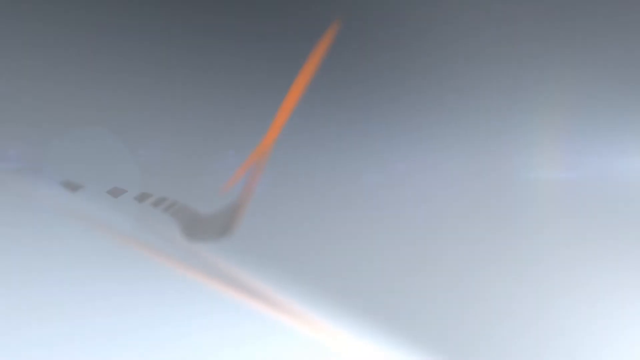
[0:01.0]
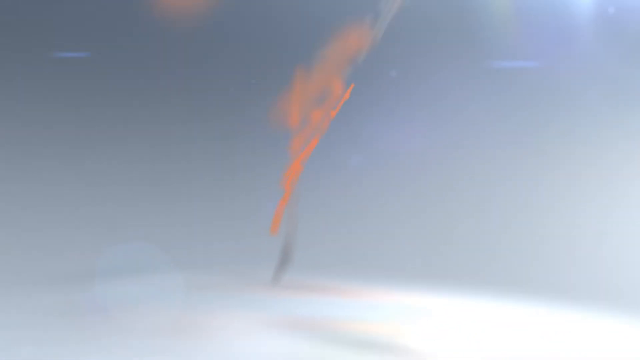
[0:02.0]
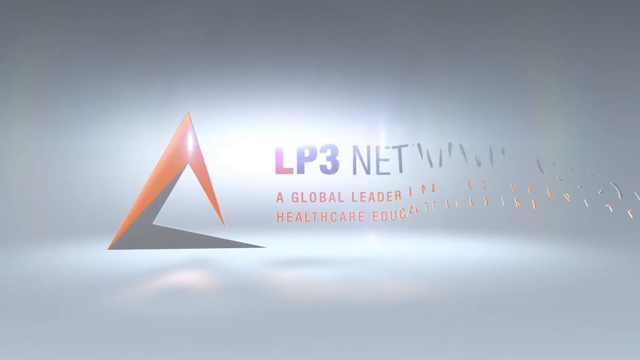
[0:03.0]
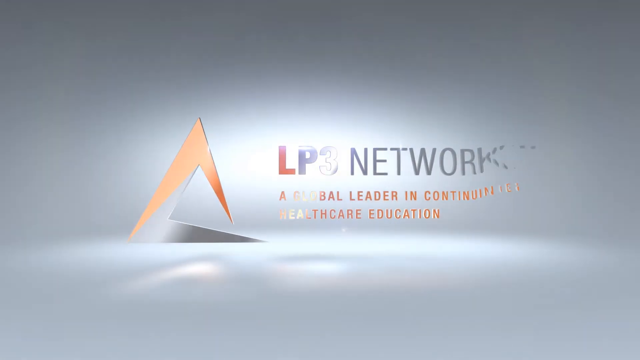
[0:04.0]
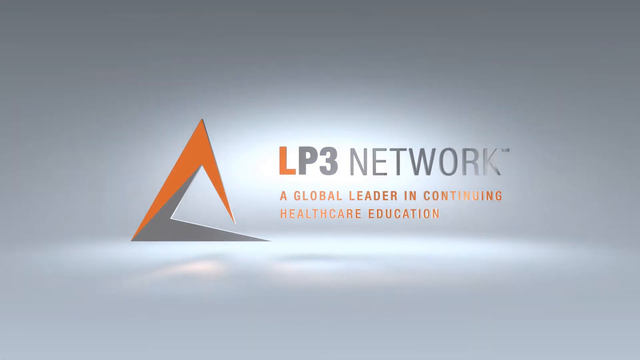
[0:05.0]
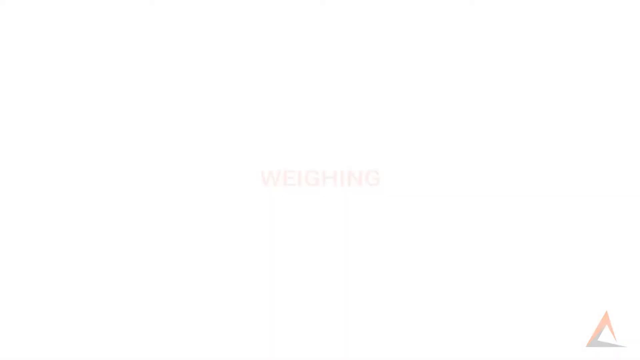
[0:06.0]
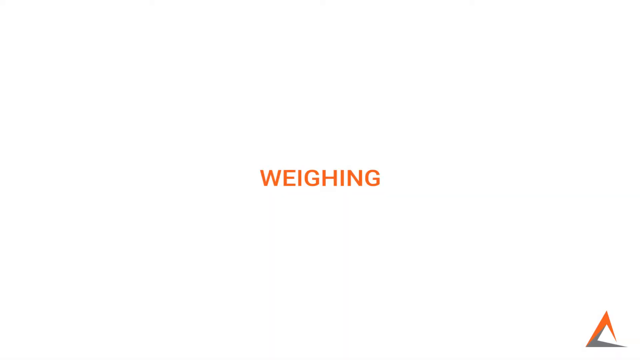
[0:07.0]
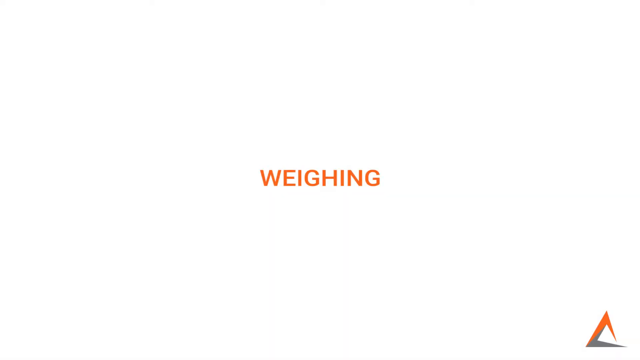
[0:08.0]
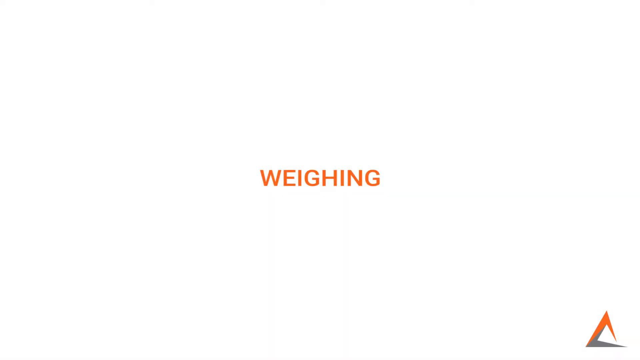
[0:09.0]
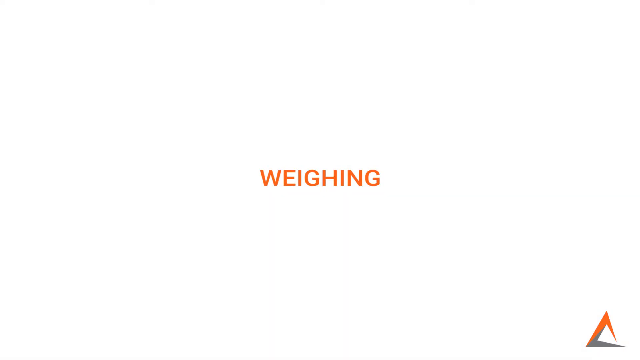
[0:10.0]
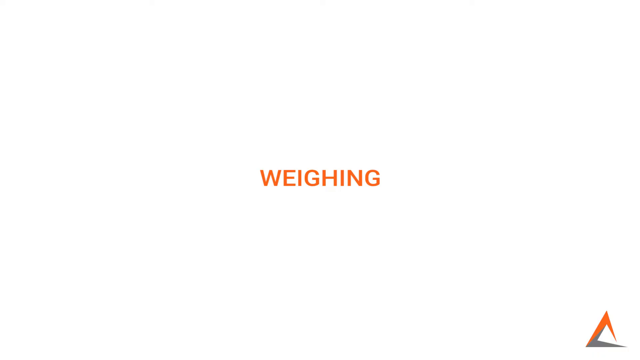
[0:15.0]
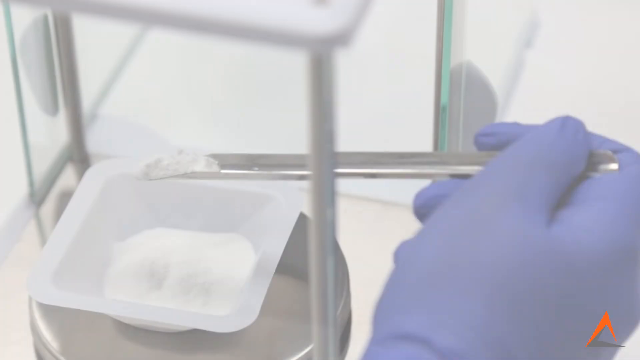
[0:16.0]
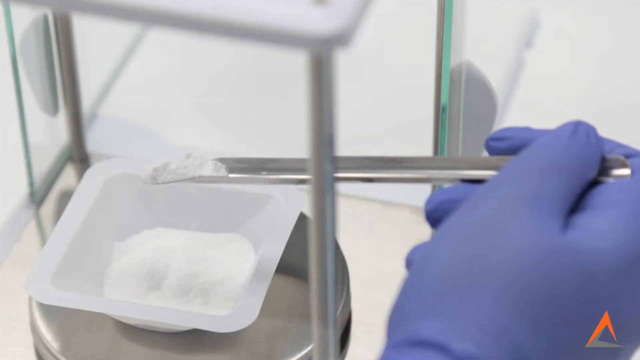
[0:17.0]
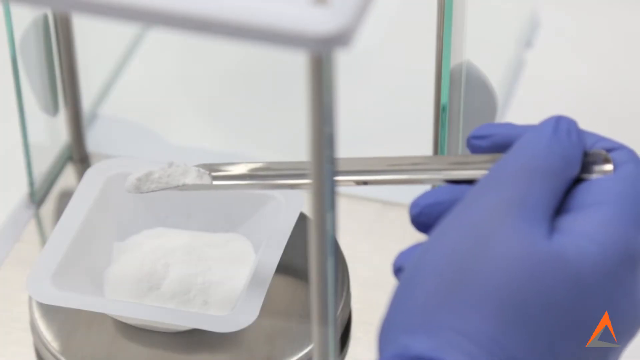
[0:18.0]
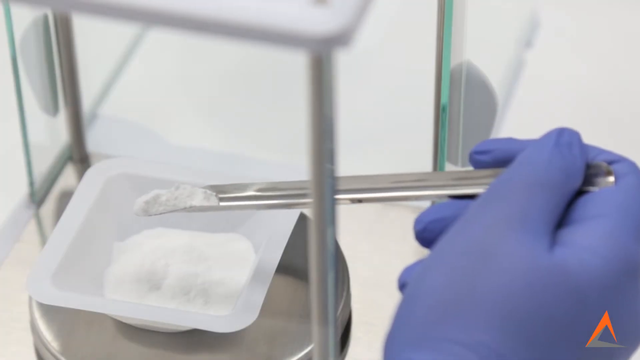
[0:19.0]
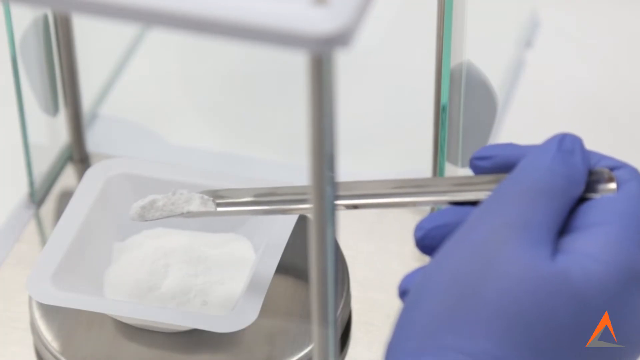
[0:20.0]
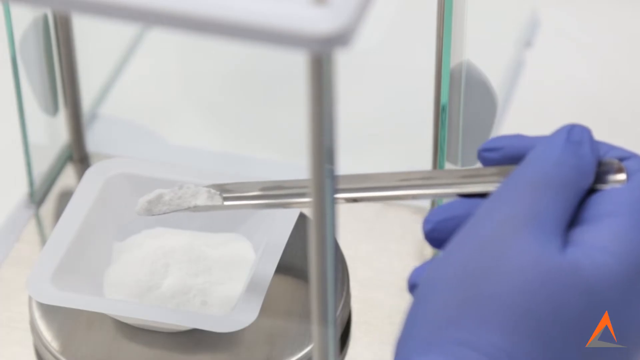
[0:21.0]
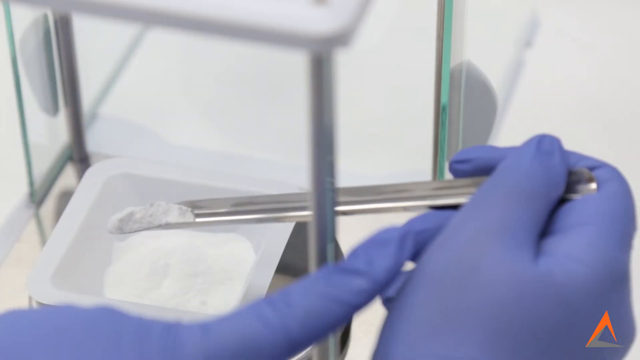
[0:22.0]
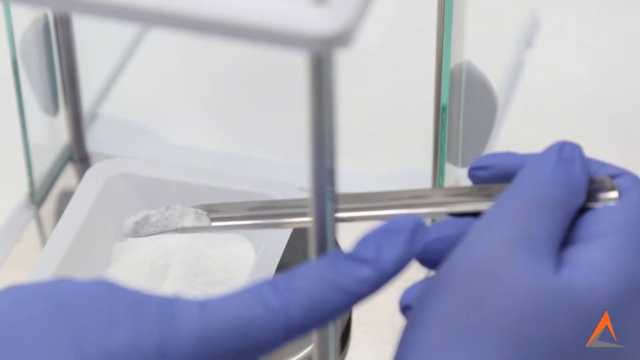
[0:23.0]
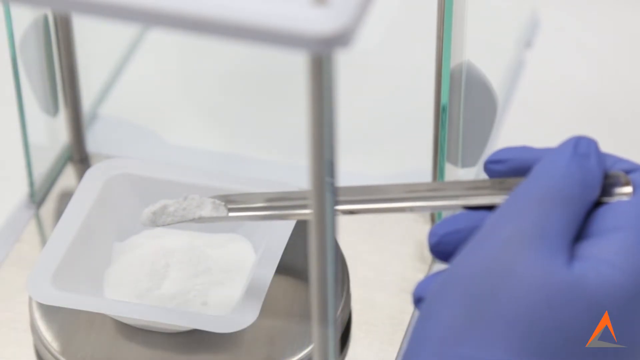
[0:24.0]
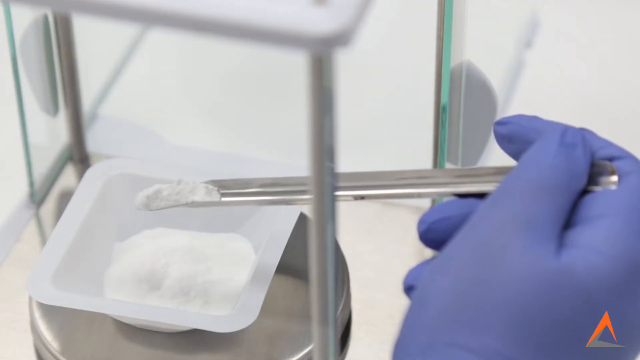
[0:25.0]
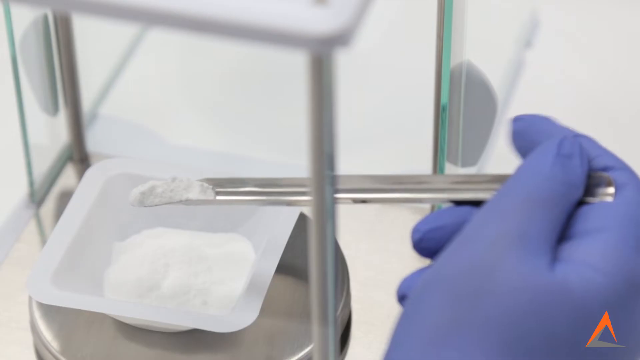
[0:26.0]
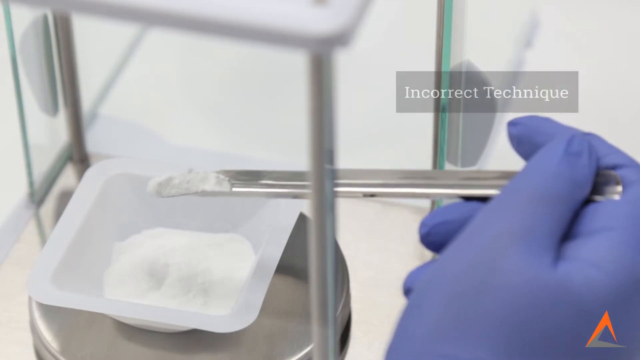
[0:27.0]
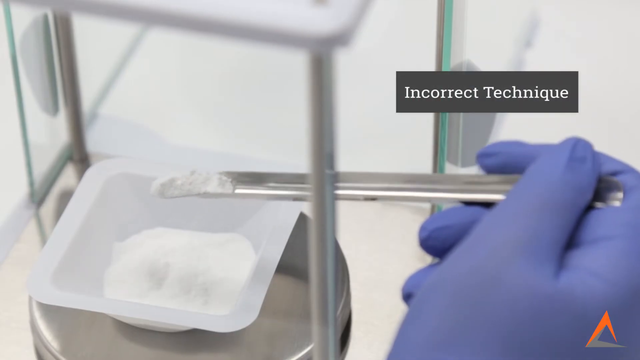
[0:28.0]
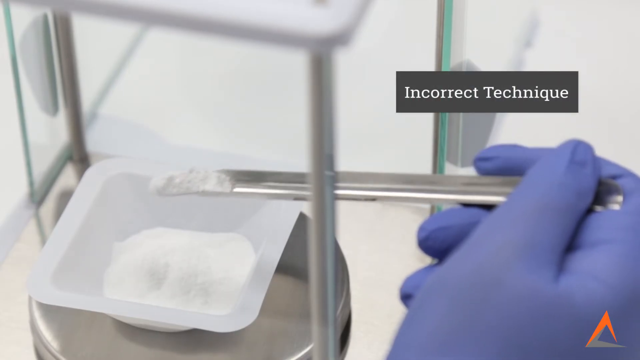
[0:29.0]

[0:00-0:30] A gray screen shows an orange triangle in the middle, with "LP3 Network" to its right and, underneath in orange, "a global leader in continuing healthcare education." The screen then turns white, and across the middle the word "weighing" appears in orange capital letters. Next, a shiny, round metal platform comes into view with a small white plastic container on it, and white powder is inside the container. A person's right hand holds a metal tool with a small scoop spoon at its tip; the tip is over the plastic container and holds a little white powder. The person's left hand, wearing a purple rubber glove, comes in and points to the metal tool, and the right hand holding the tool taps it with its top finger. Above it, a gray box reads "incorrect technique."